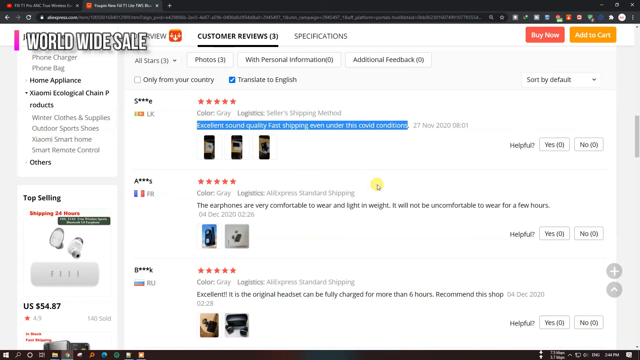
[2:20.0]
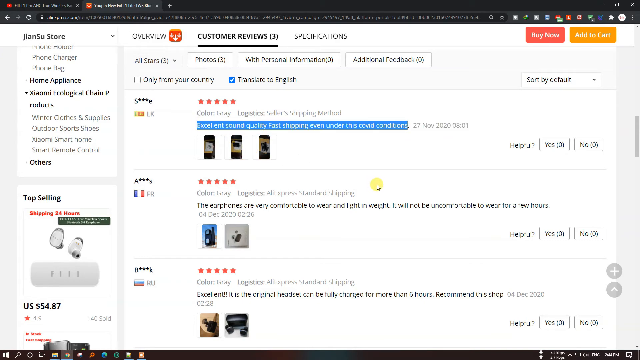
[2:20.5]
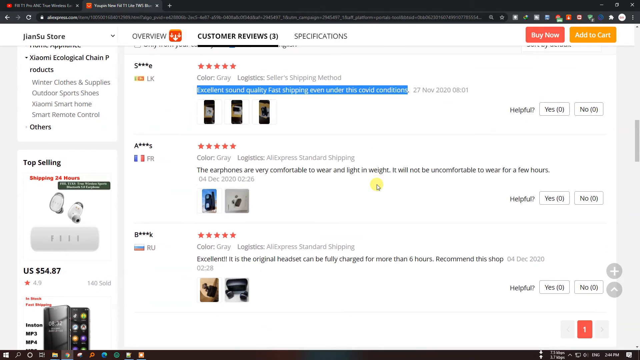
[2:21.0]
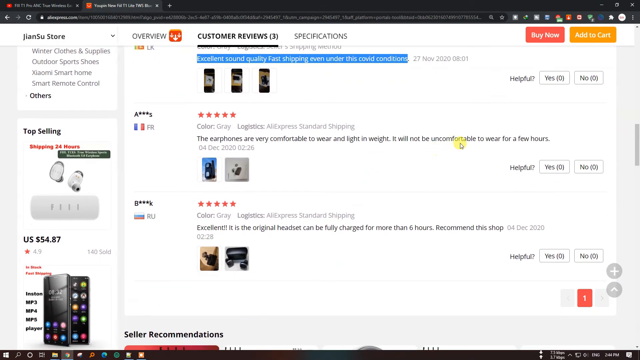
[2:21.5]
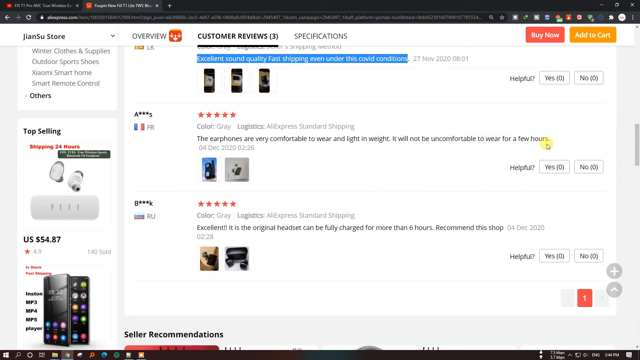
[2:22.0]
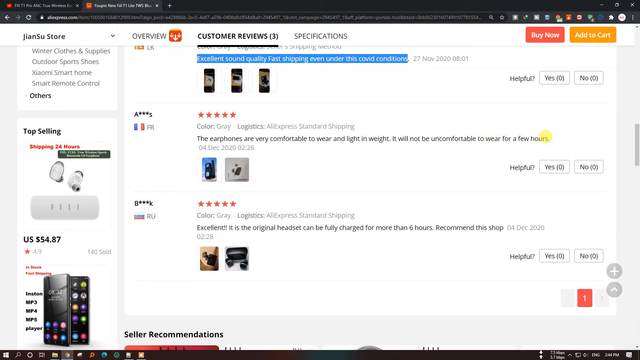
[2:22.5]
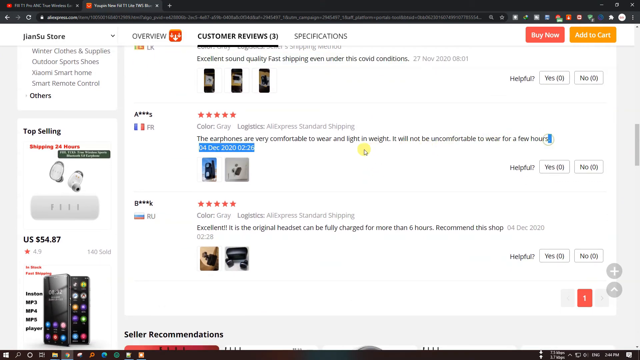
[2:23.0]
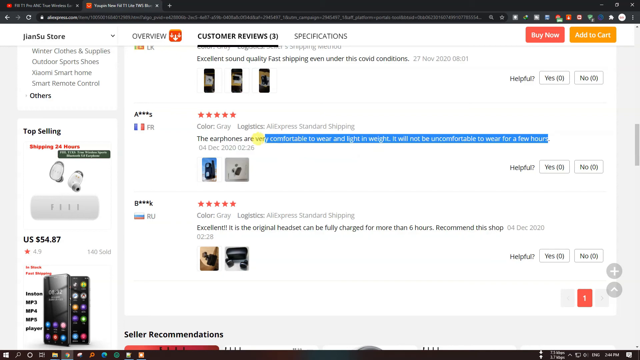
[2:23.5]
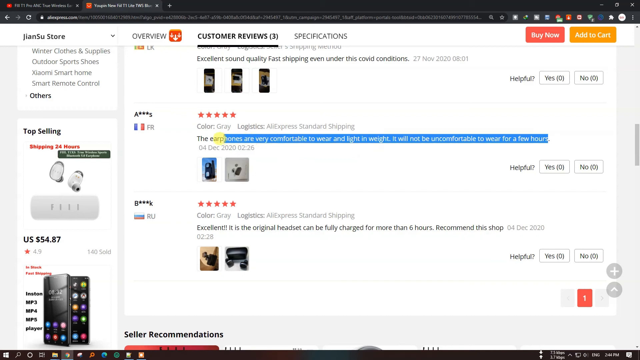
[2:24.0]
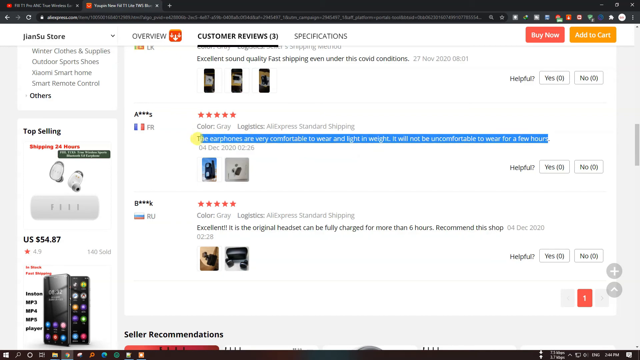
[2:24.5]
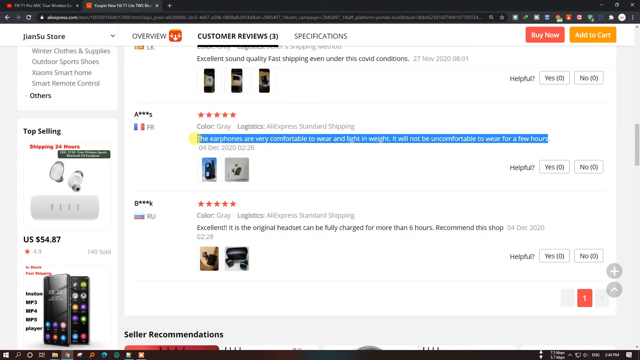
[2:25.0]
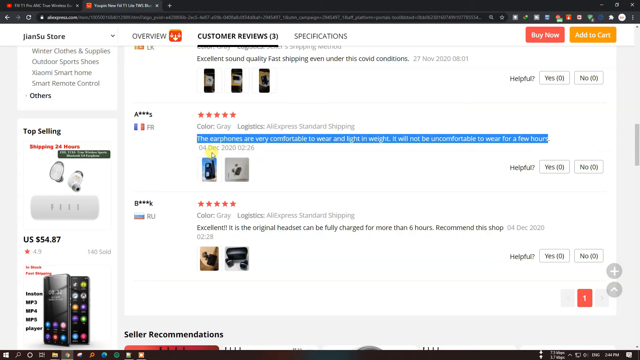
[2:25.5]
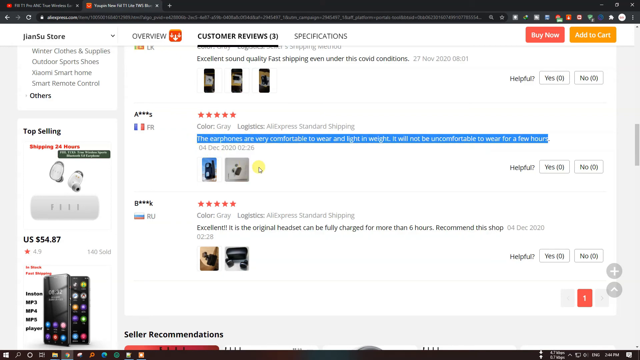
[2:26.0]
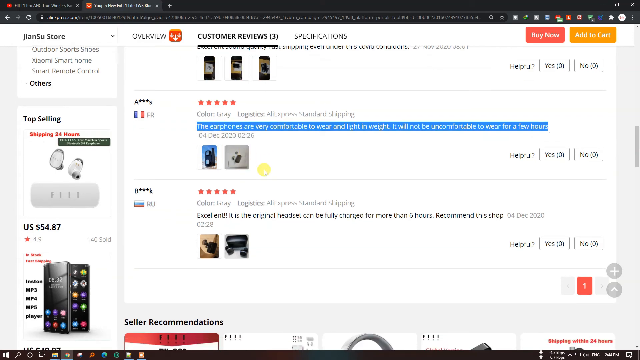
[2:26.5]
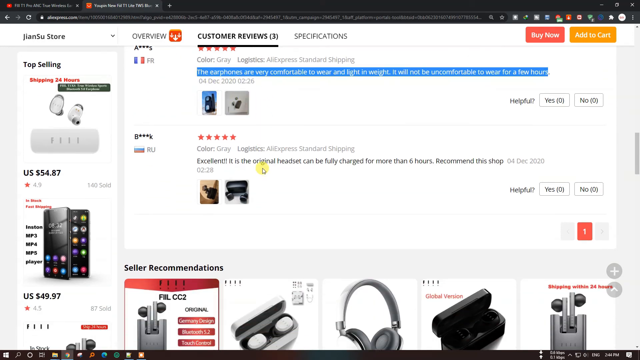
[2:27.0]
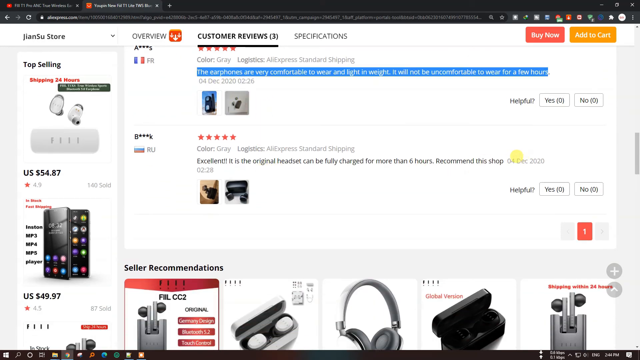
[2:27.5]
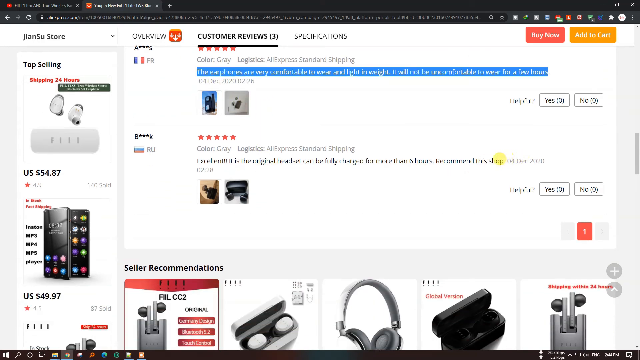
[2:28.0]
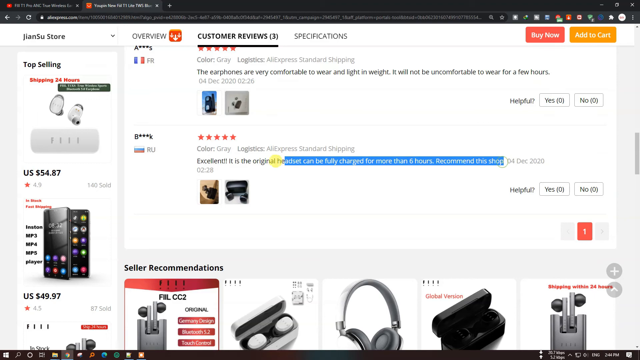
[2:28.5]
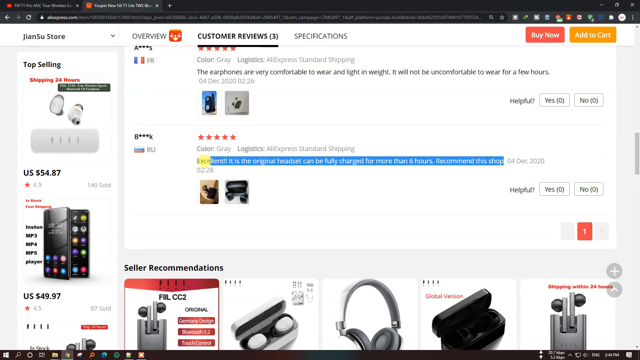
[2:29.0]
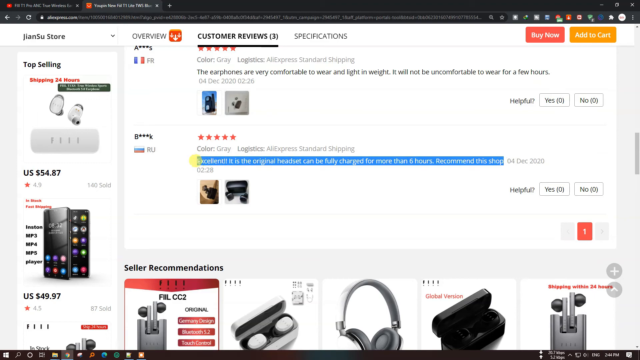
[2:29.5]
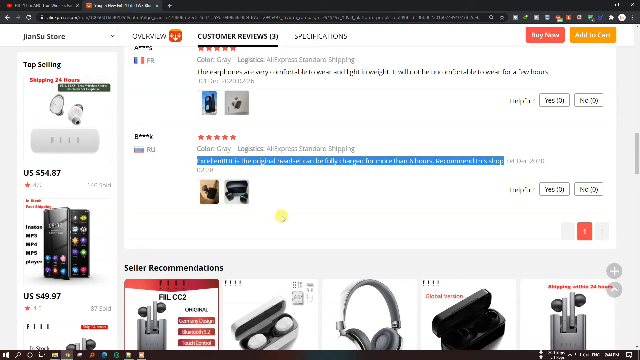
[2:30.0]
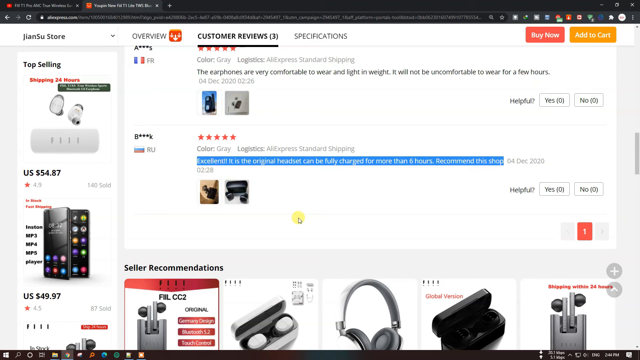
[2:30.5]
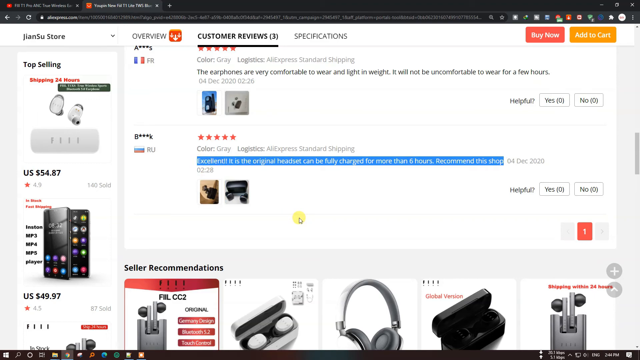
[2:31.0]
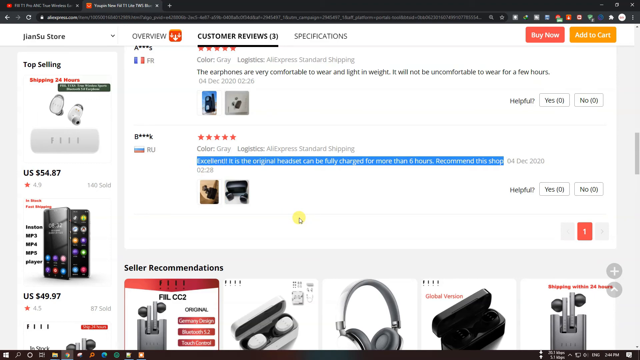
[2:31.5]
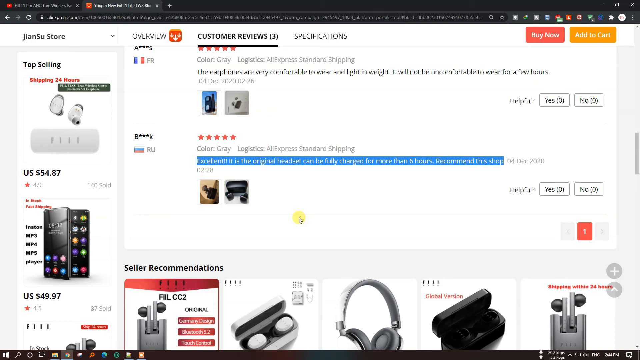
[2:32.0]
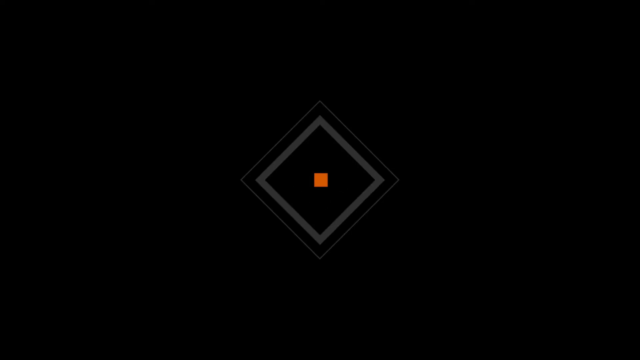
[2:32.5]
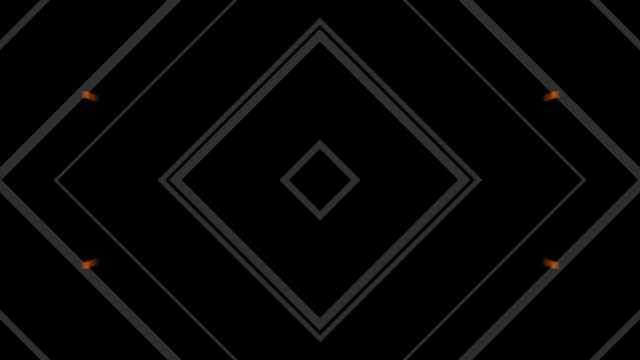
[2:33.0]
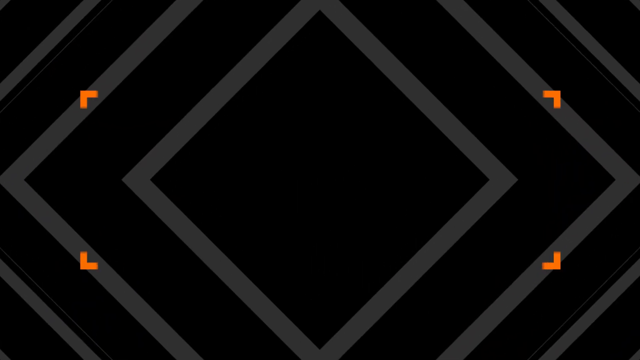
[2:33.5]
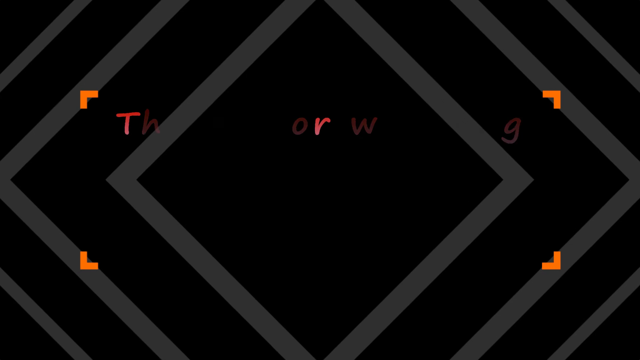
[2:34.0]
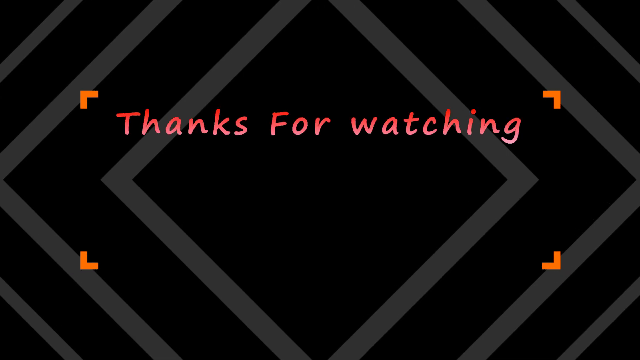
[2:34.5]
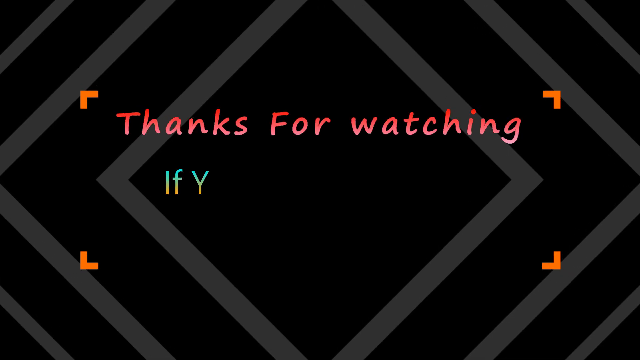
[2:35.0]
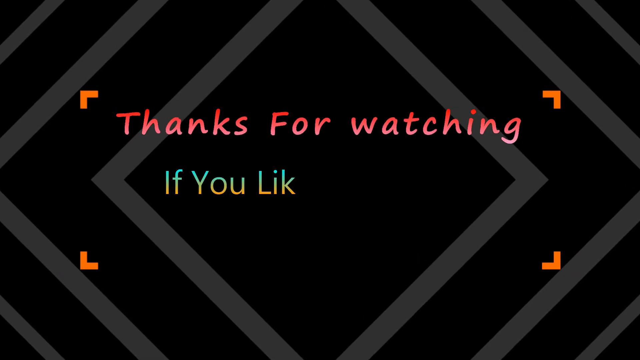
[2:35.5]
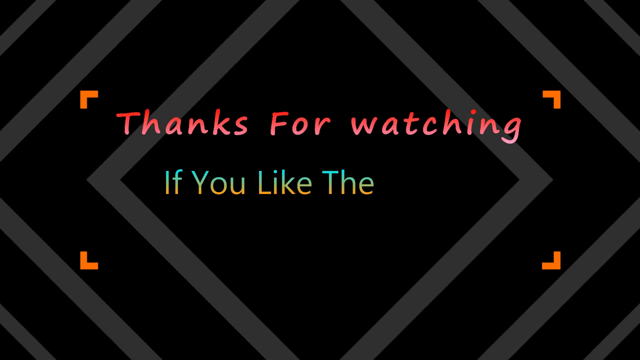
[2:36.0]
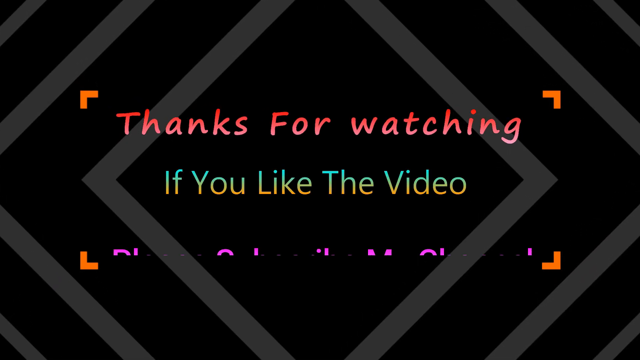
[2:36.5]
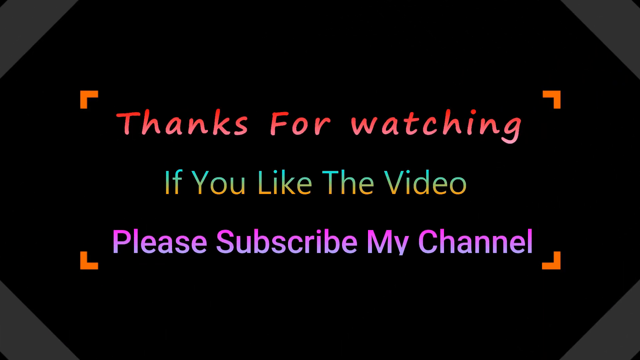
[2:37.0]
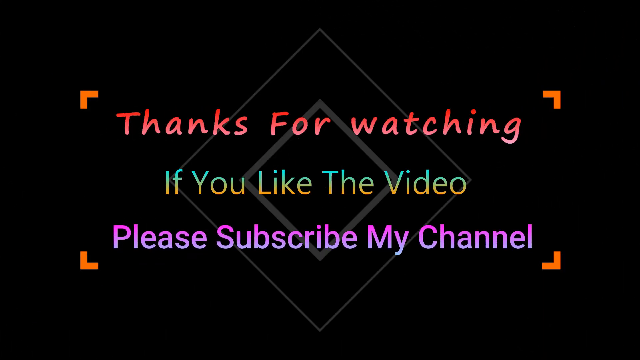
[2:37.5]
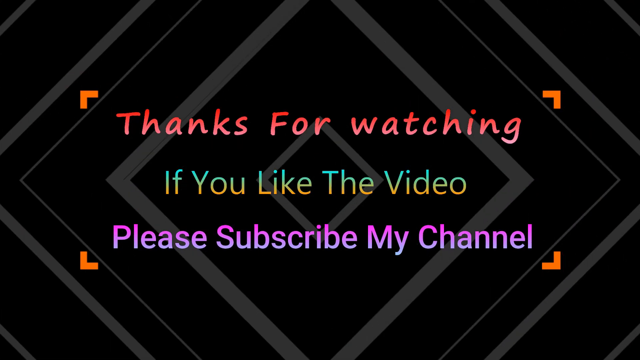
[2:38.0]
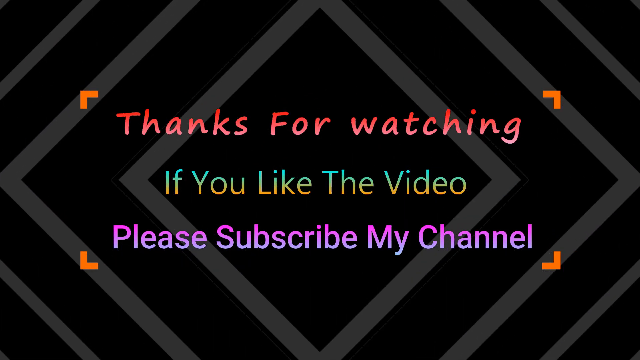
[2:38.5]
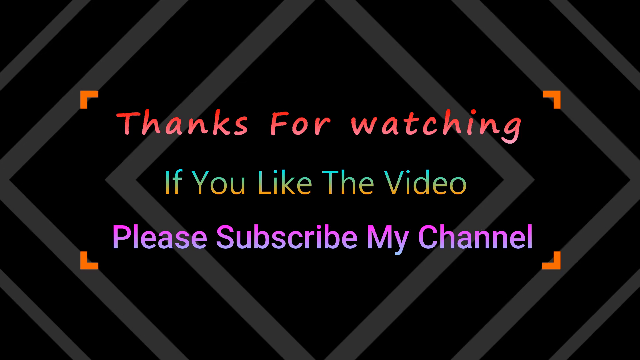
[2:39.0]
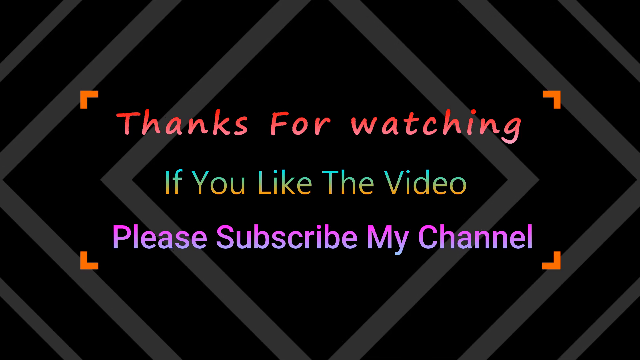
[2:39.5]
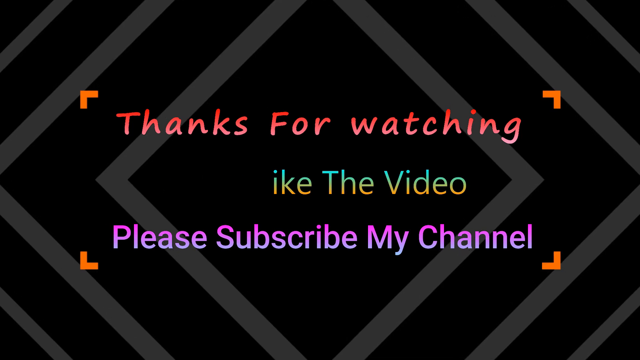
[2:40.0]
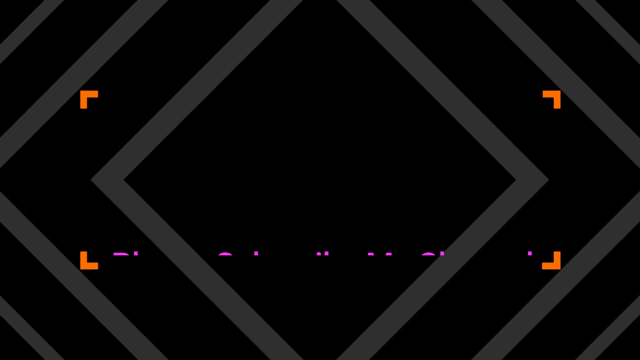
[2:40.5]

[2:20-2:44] The user is still looking at the reviews. The second review was also posted on the 4th of December 2020; two of the reviews were posted two minutes apart on the same day, one claiming to be from Russia and the other from France. Seller recommendations for other products appear, and the info bar on the left-hand side lists top-selling products and their prices in US dollars. At the end, viewers are thanked for watching and invited to subscribe to the originator's channel.